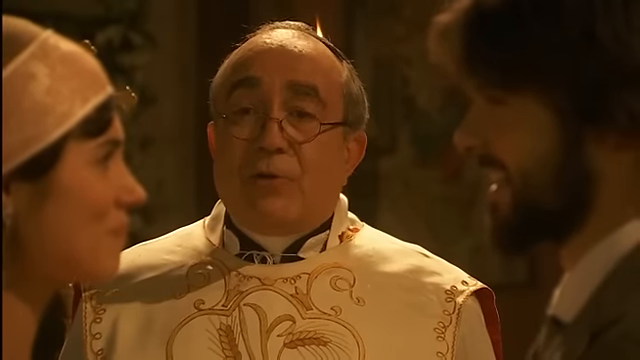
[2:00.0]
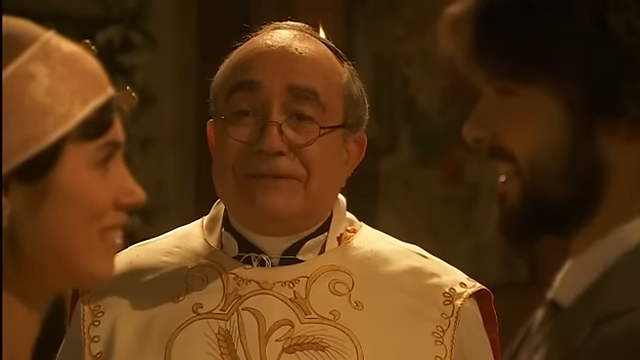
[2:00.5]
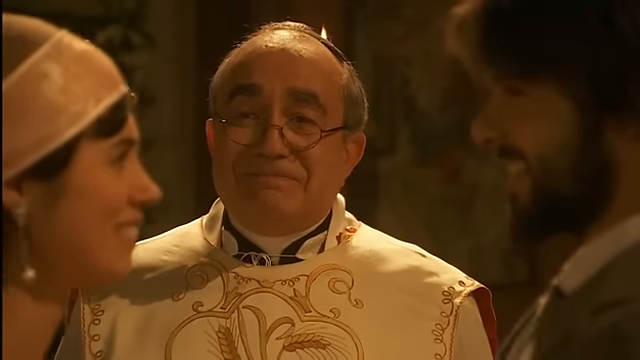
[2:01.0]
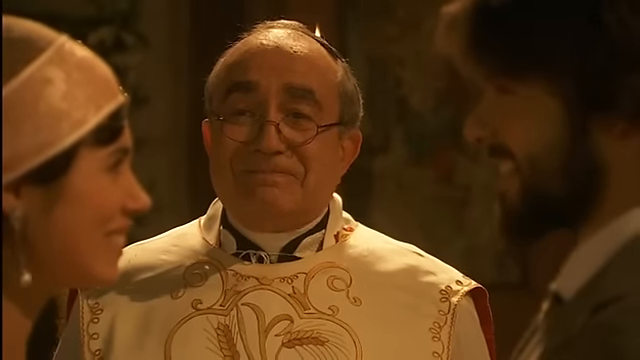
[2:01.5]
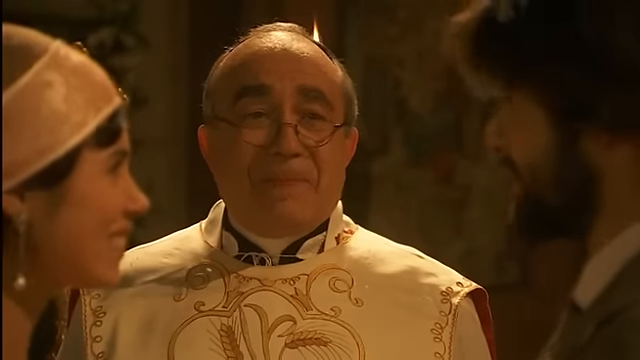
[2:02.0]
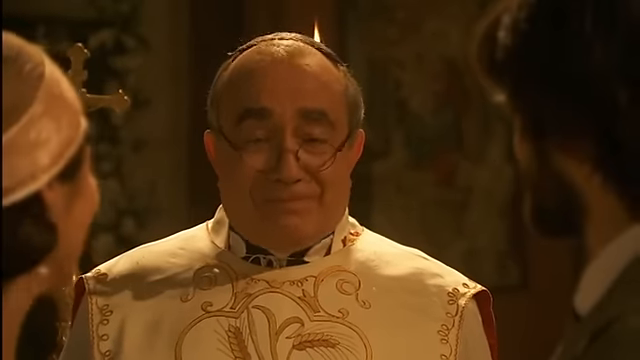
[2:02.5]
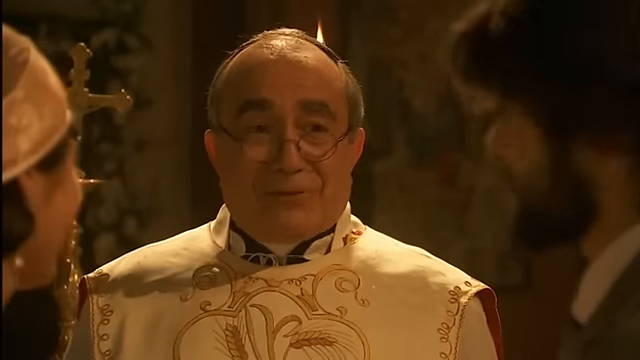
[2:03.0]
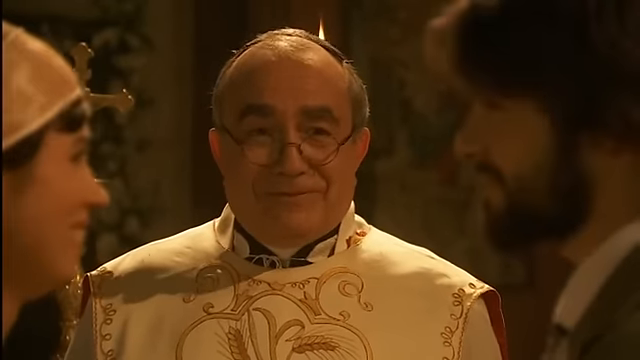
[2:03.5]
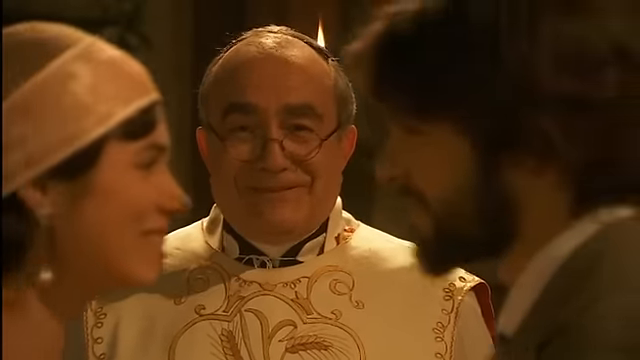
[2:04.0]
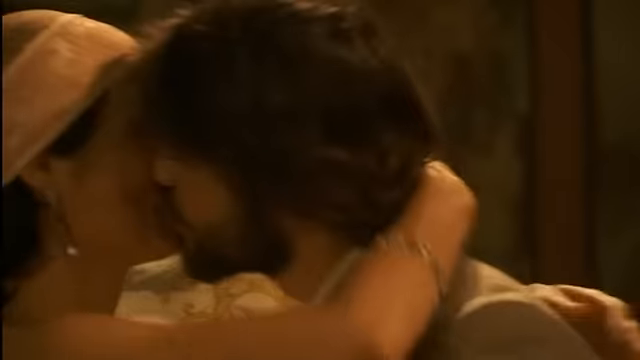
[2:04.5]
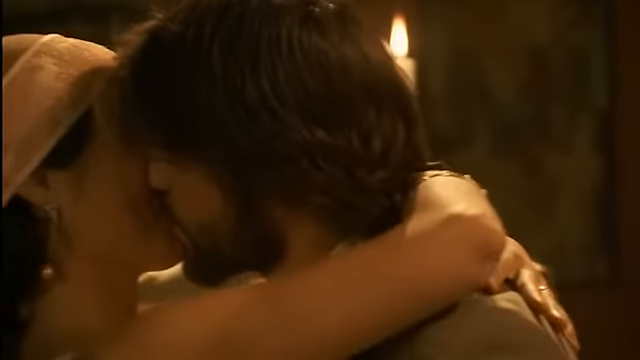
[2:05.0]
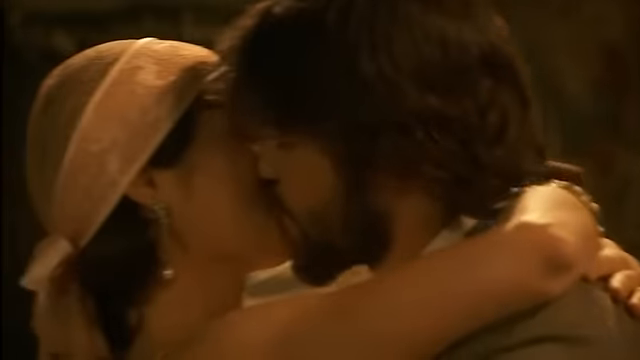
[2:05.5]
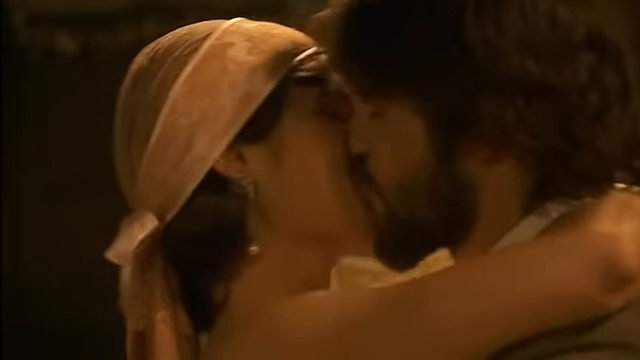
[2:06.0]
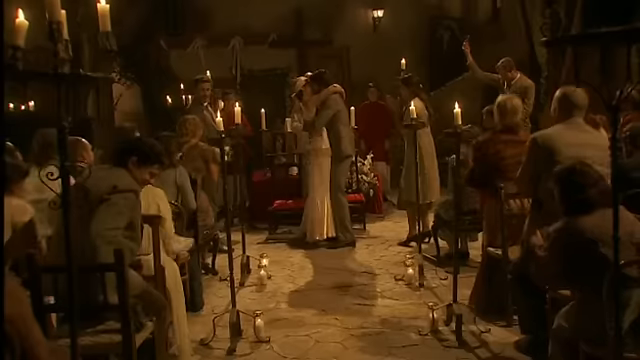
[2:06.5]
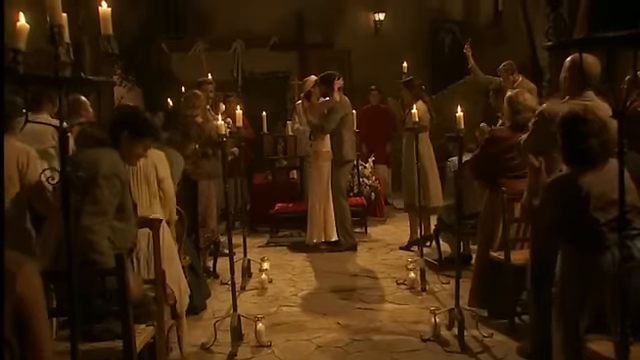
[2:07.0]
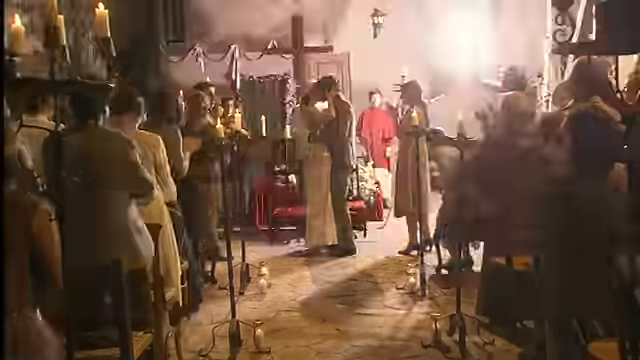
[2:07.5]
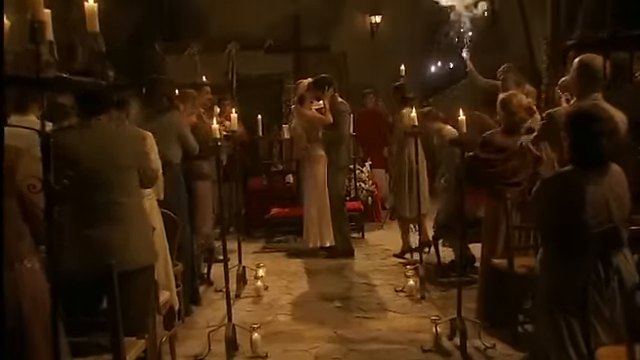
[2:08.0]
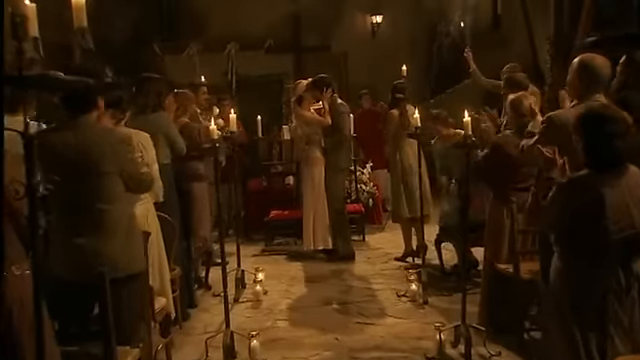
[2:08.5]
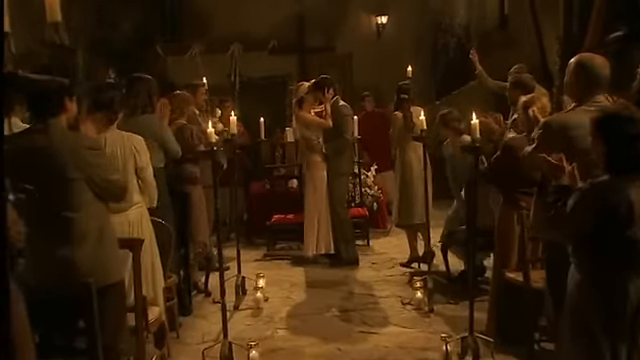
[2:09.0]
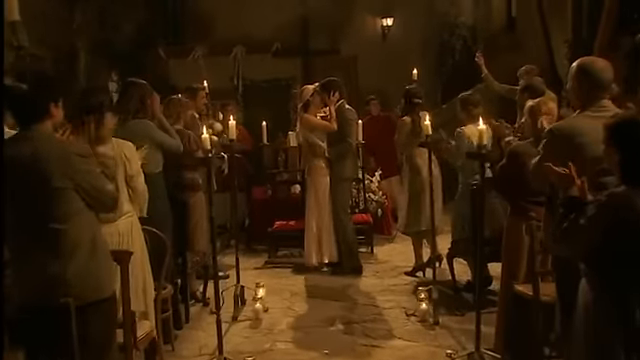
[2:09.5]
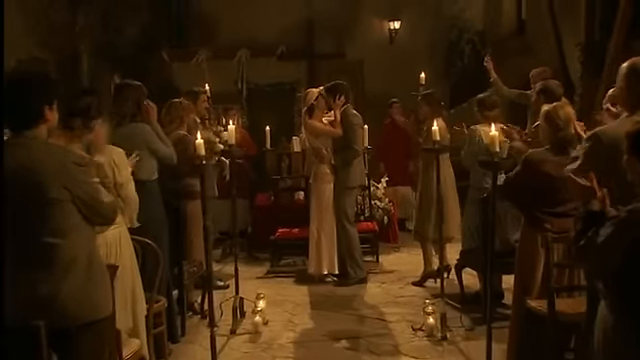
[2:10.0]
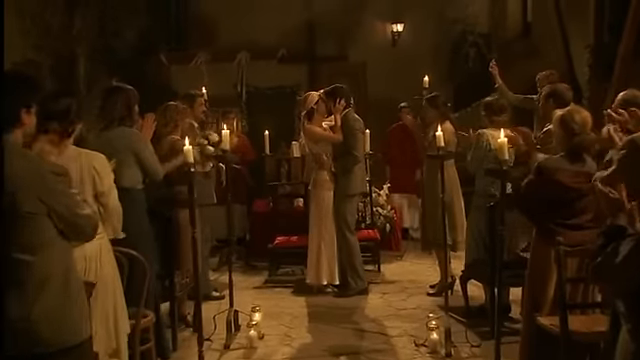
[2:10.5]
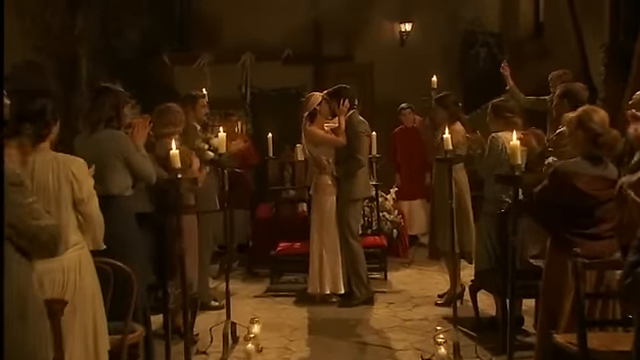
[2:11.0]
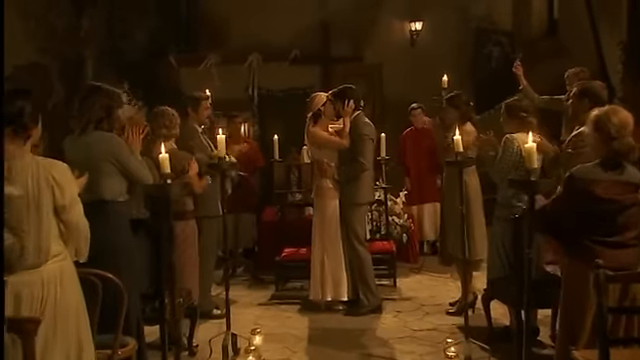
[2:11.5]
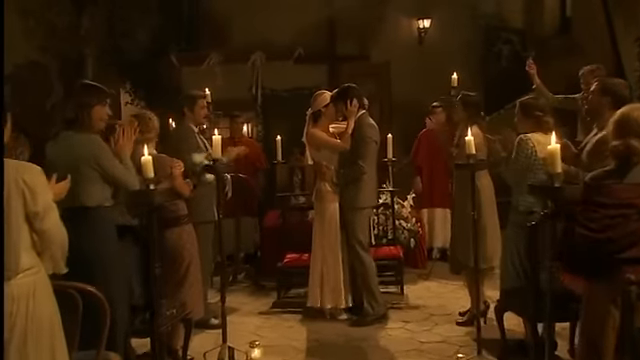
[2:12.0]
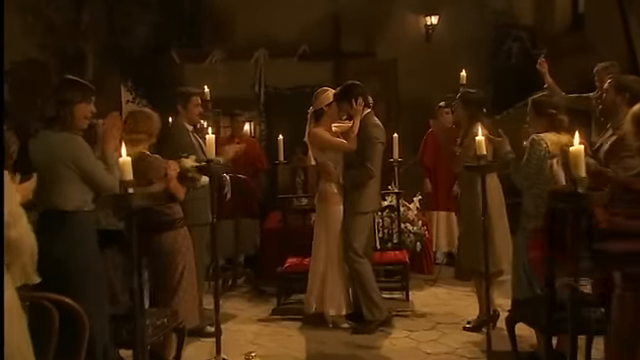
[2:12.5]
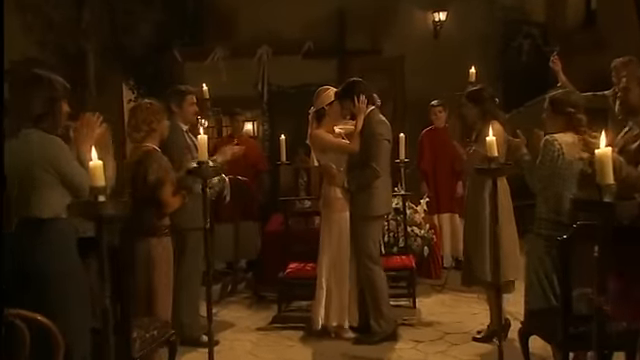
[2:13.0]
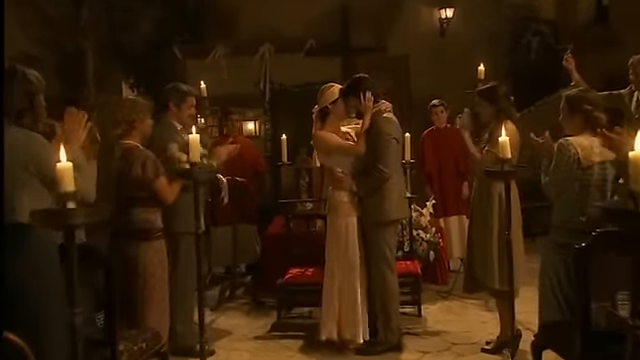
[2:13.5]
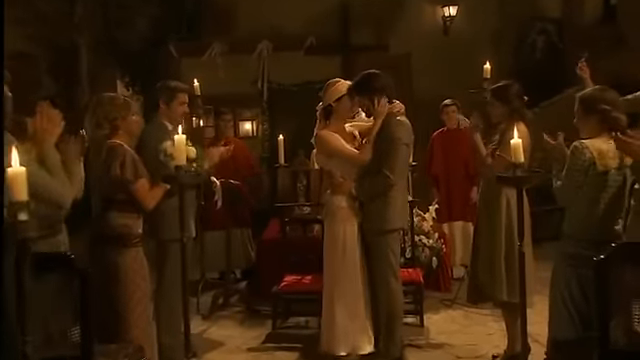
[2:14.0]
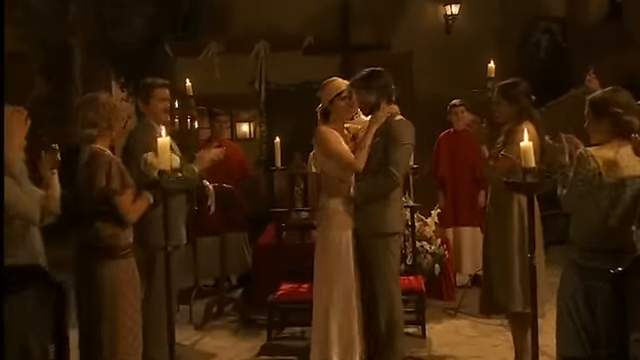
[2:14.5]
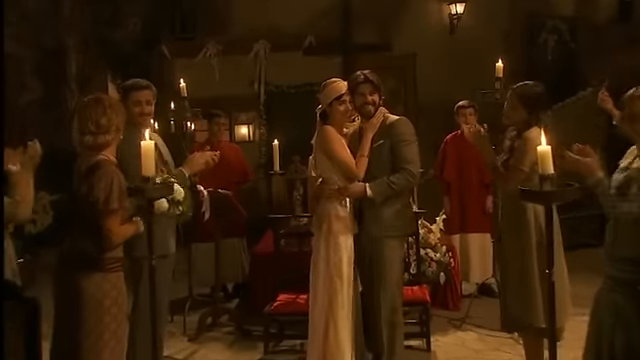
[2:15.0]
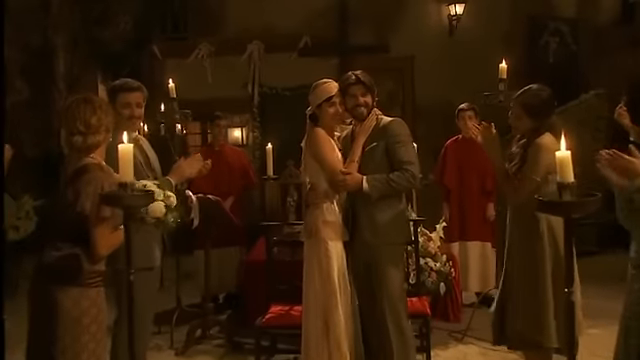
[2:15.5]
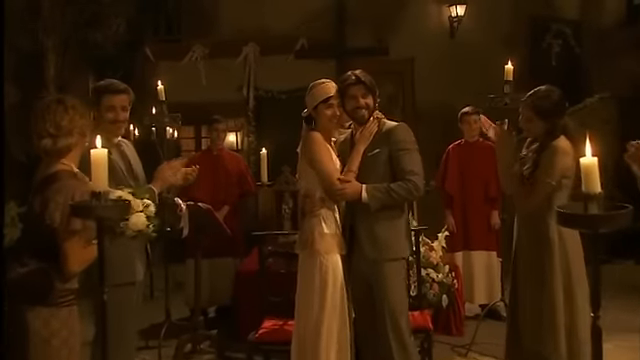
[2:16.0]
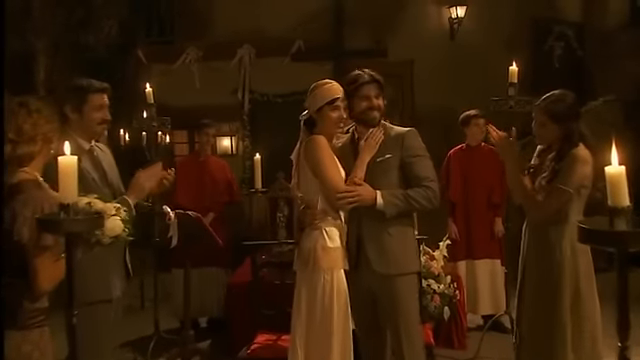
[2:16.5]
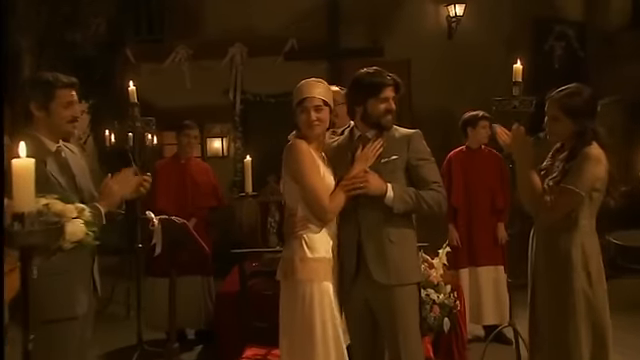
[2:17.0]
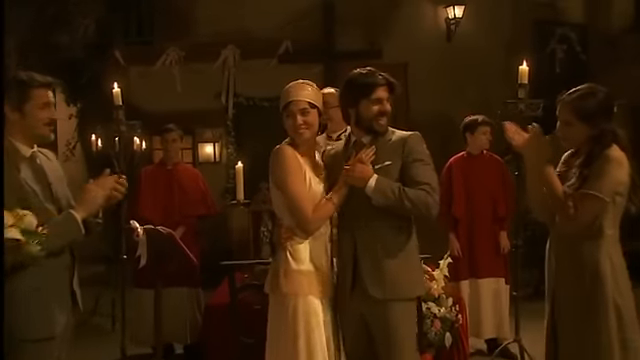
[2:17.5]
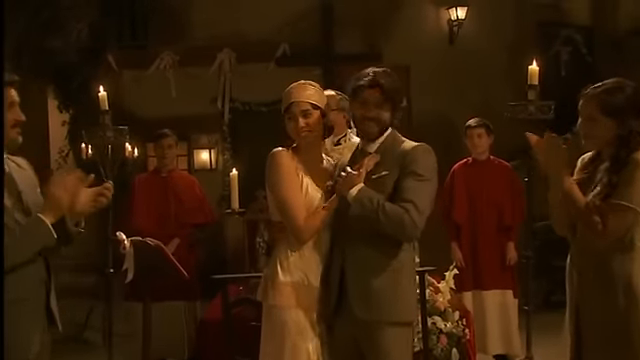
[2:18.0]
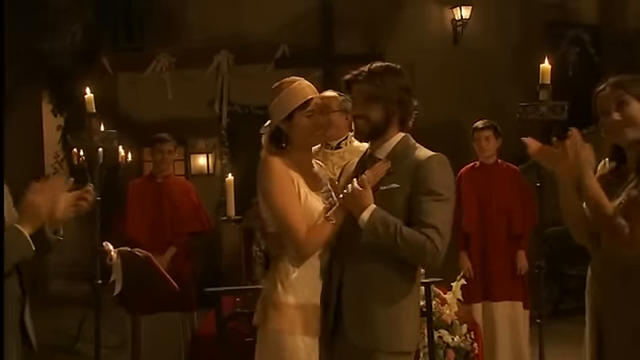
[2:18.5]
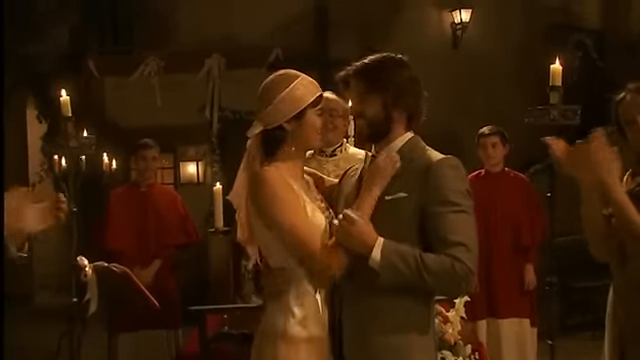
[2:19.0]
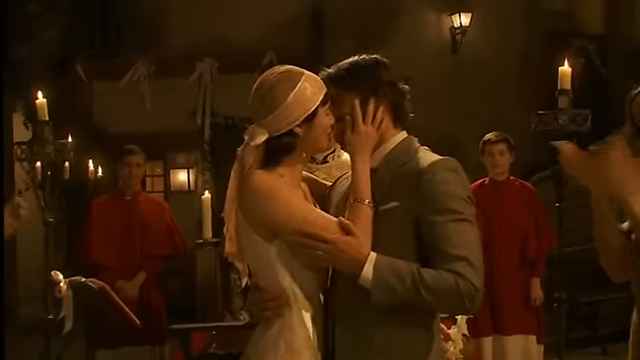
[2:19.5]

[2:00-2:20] The priest announces that the bride and groom are now husband and wife and that he may now kiss the bride. They embrace and kiss, and the entire church jumps up, clapping their hands and saying "yay." The photographer shoots off another photo with the flash, a giant light coming from the box he holds above his head. The camera scans through the crowd and up toward the bride and groom exchanging their first kiss, then looks out toward the crowd of family members celebrating around them. A full view of the bride's dress shows a lighter pink slip dress, and she wears what looks to be a veil like a do-rag with a pink-peach ribbon on it. They kiss again in front of their friends and family.